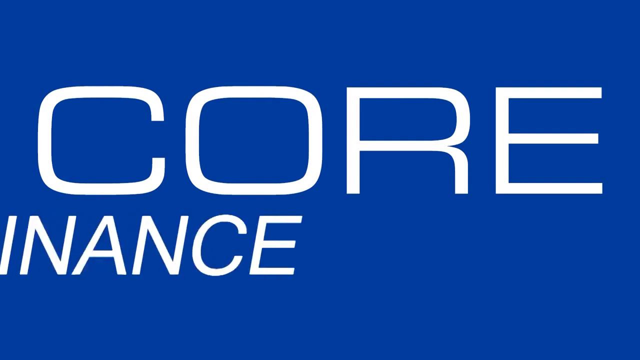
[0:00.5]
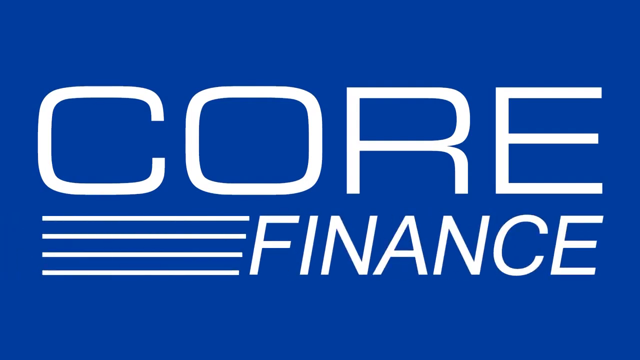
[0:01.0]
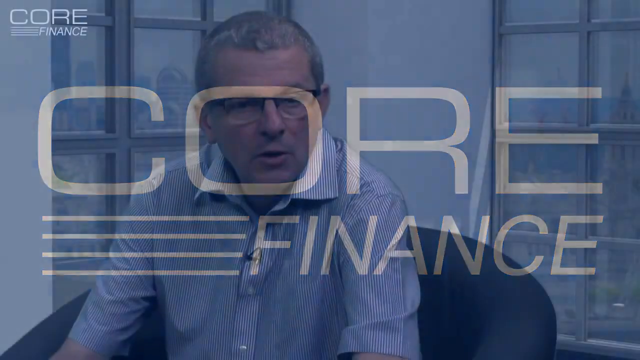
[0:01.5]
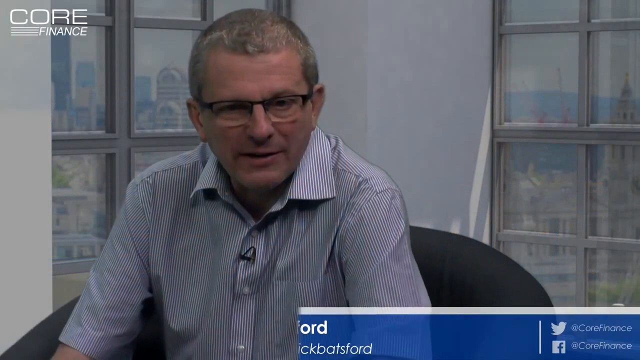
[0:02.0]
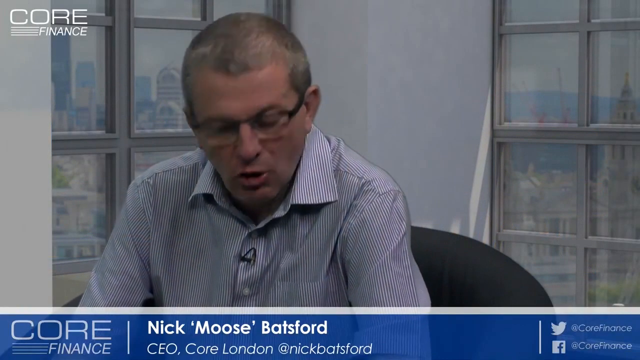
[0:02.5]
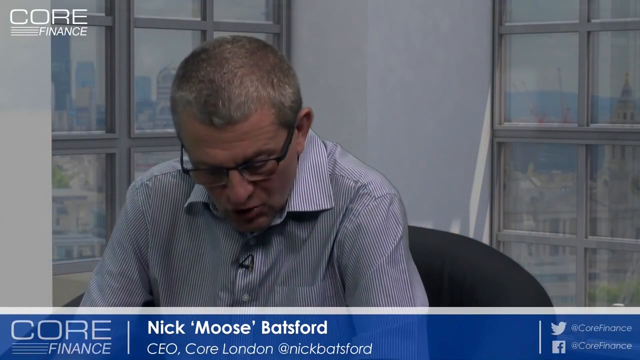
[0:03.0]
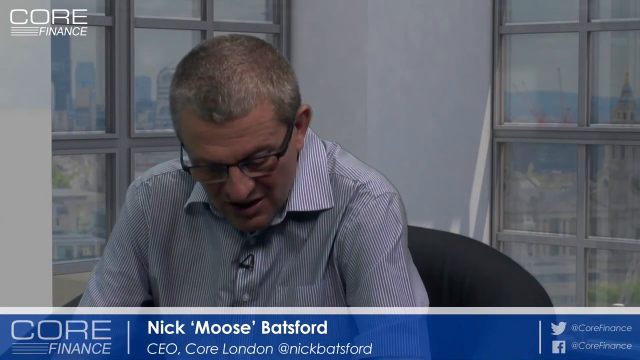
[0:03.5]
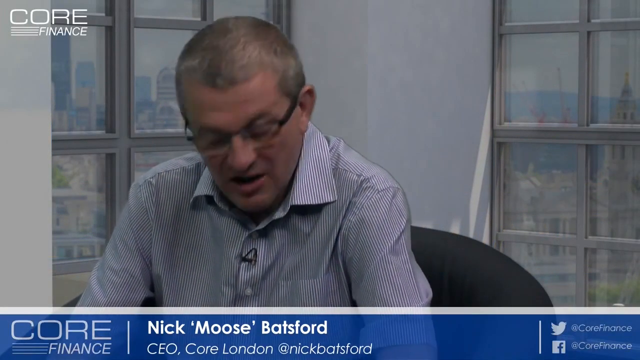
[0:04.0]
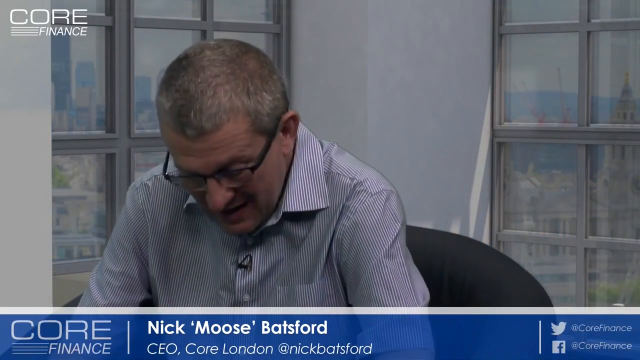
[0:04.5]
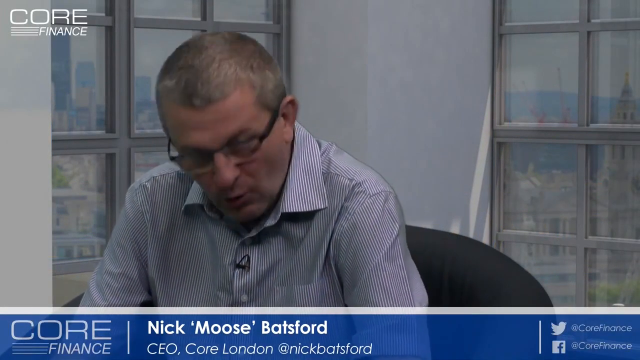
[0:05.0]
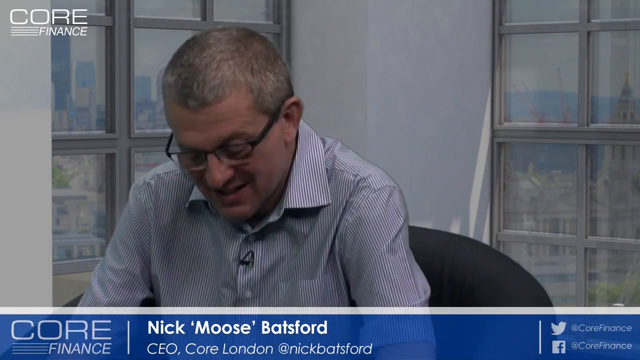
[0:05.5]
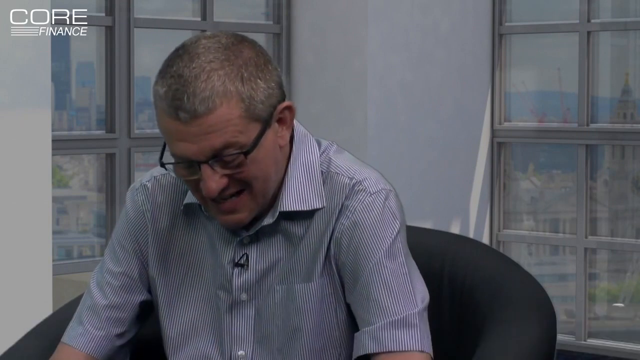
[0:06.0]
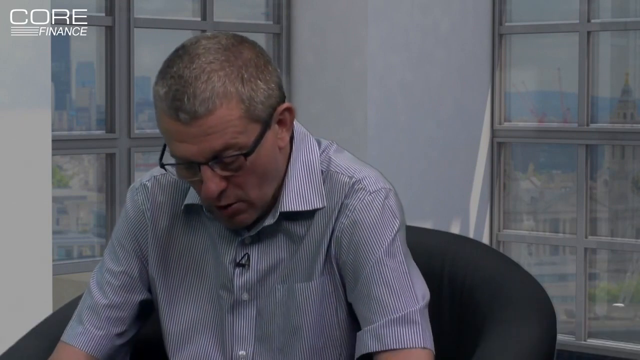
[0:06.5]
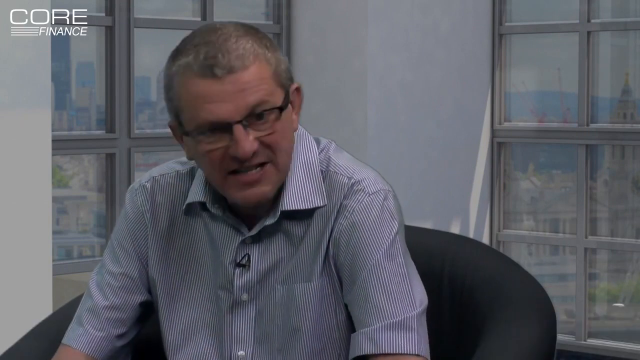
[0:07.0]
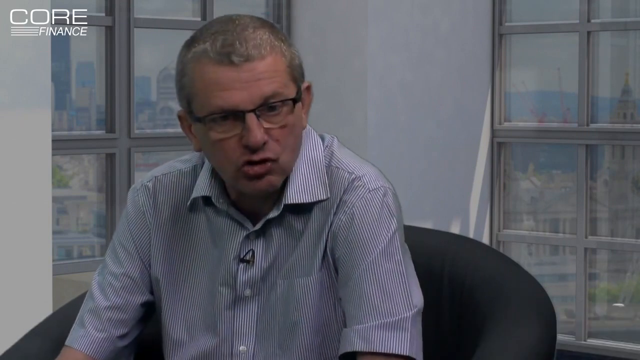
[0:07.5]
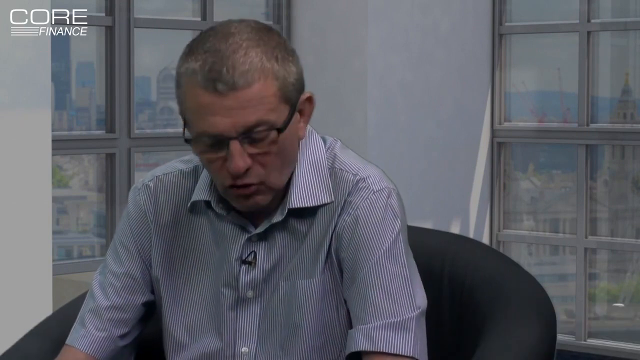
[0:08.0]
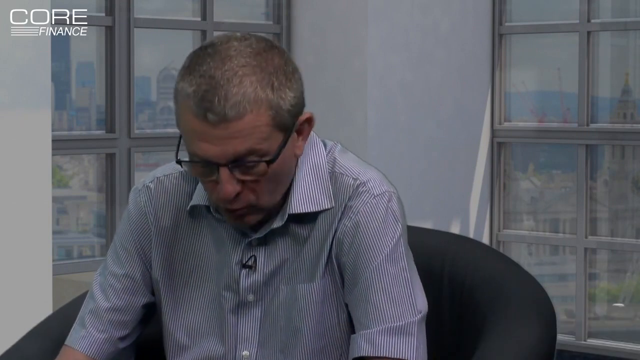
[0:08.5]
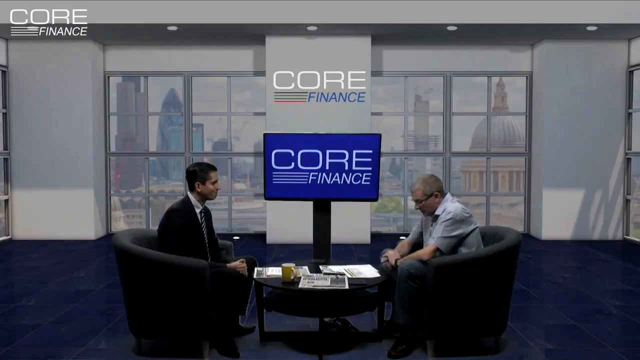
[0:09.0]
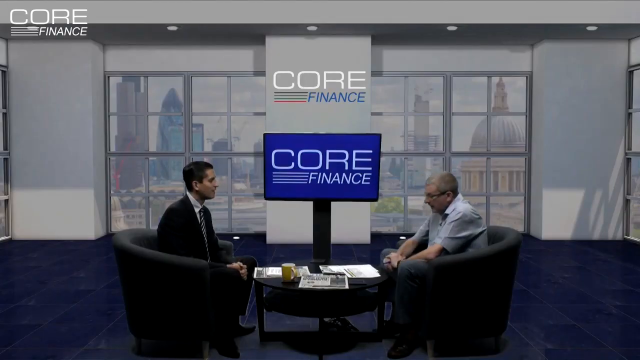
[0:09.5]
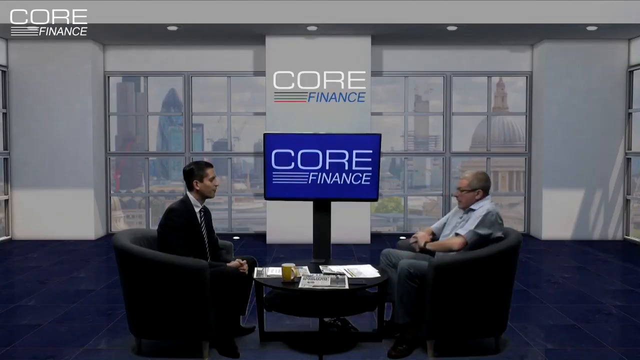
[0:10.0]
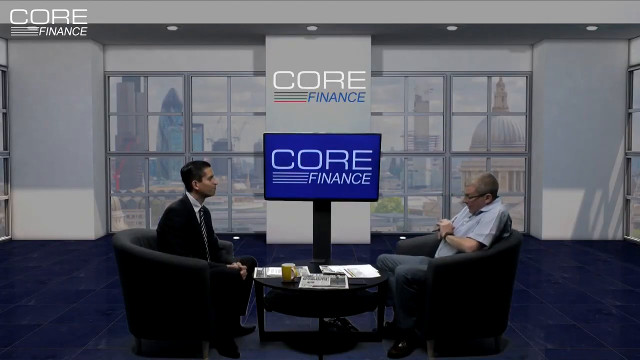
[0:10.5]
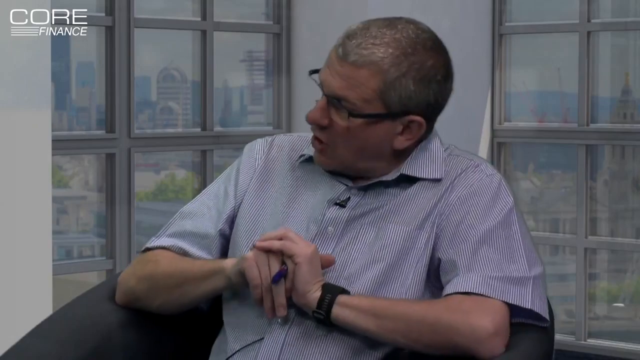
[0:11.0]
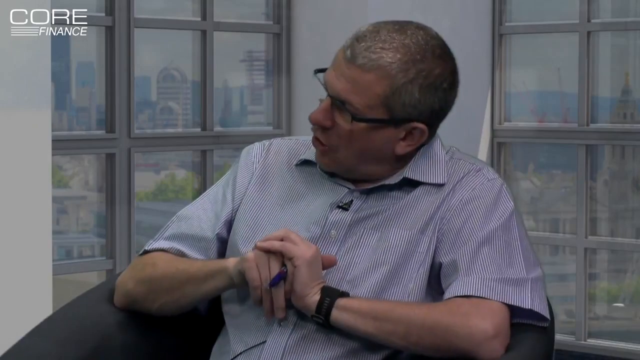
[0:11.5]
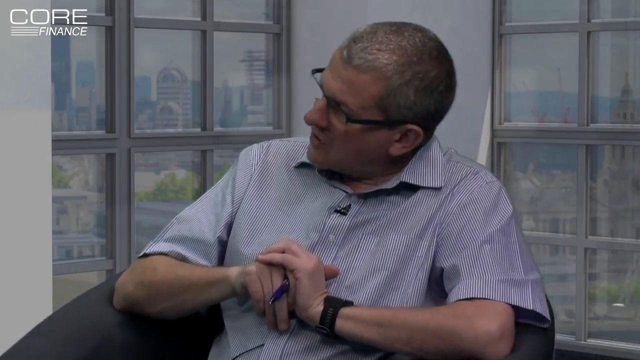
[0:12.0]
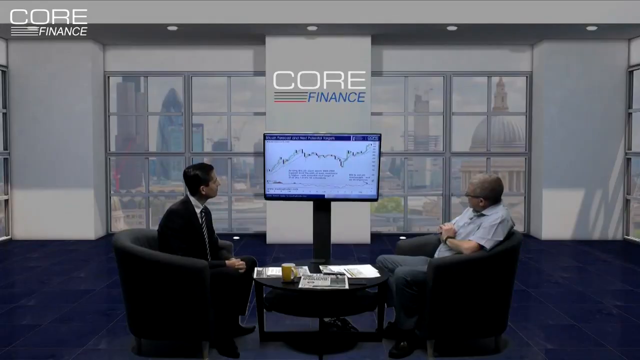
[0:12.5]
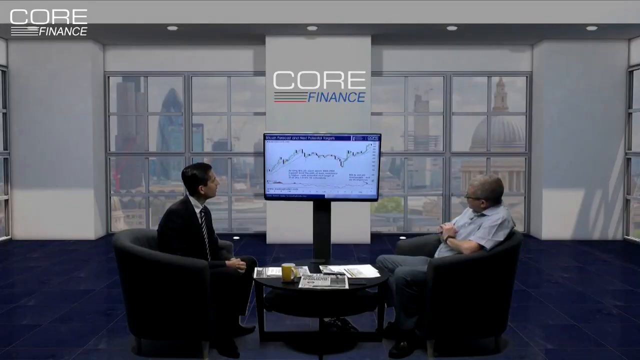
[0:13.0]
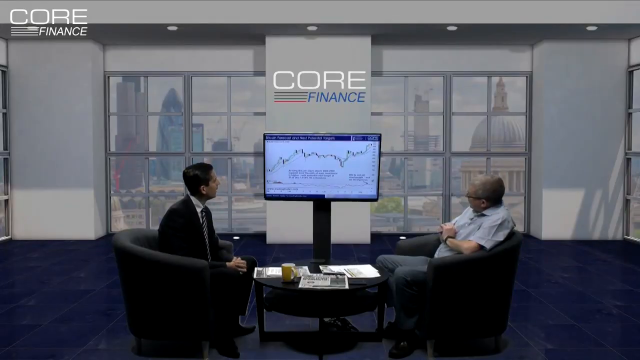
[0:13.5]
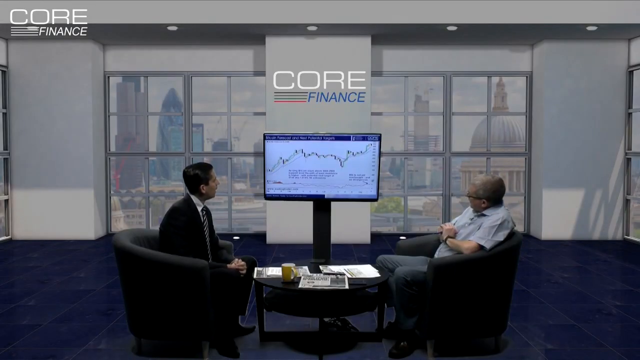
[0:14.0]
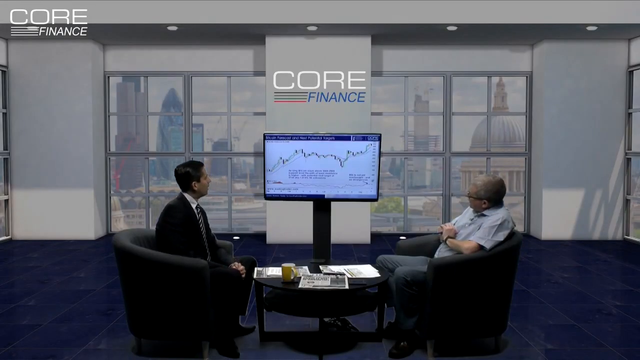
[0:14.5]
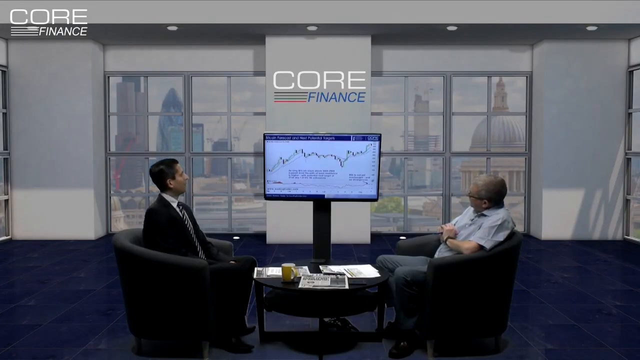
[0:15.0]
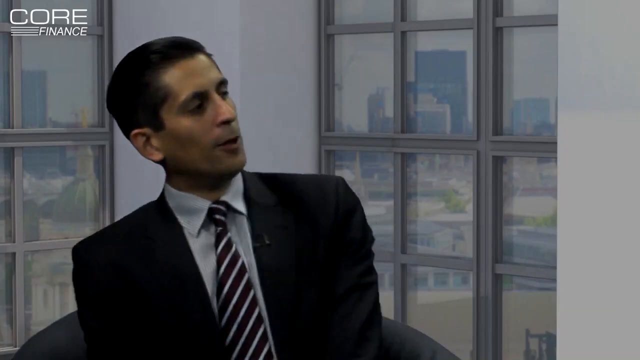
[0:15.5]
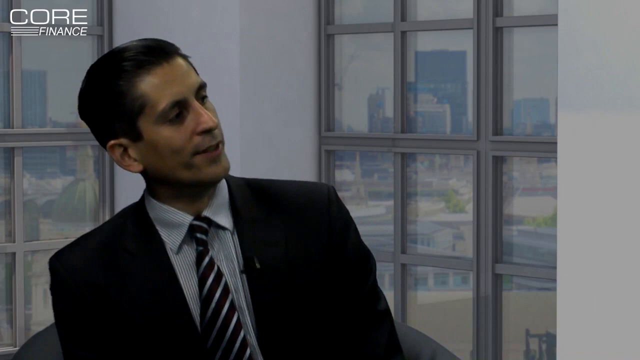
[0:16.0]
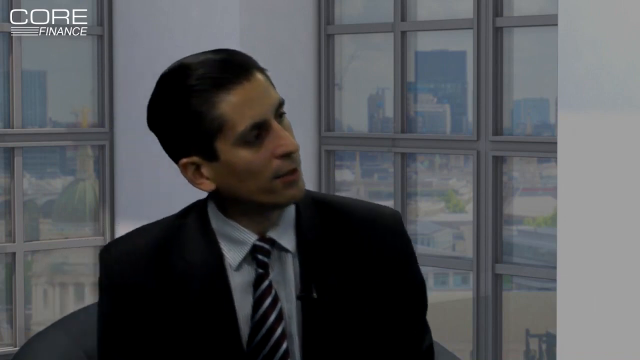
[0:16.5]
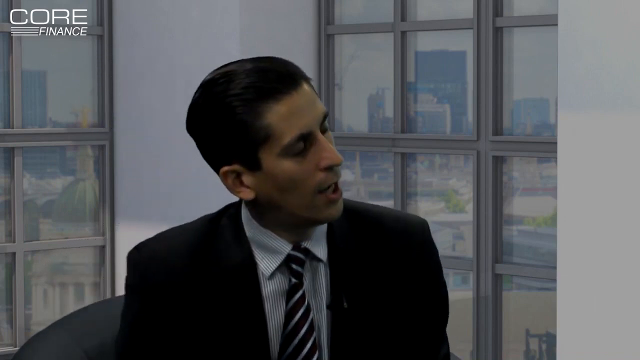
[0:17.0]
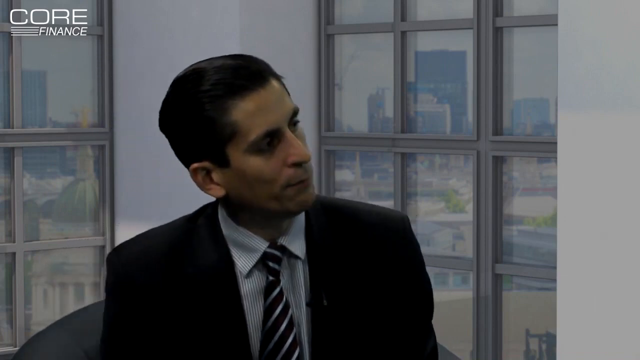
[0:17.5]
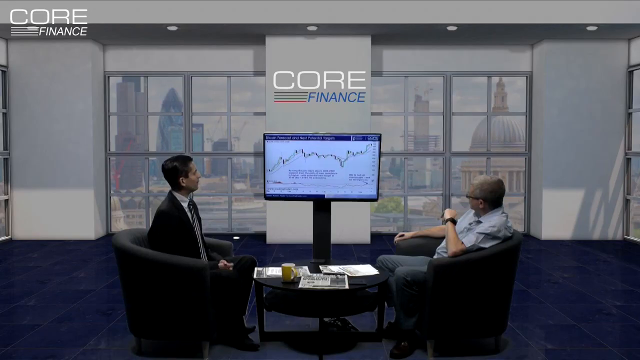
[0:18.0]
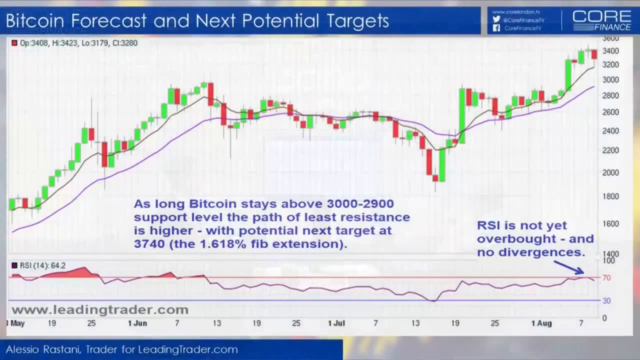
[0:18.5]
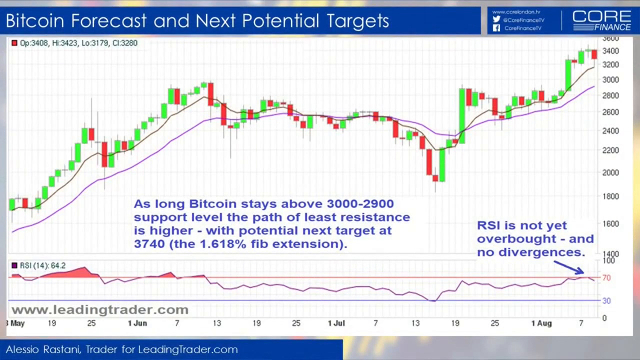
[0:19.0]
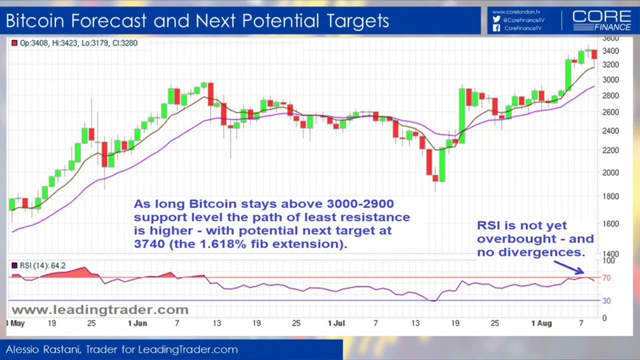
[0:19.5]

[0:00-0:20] A person is sat down on a black office chair, probably leather. He wears a short-sleeved striped t-shirt and prescription glasses, and he is sat in the corner of the office. Windows on the right and left show the outside buildings; a dome-shaped building is visible in the right window. A mic is clipped on his t-shirt, and his name appears at the bottom: "Nick Moose Batford". He is talking to the viewer. He is also carrying a blue pen and wears a black watch on his left hand. As the scene zooms out a bit, two people are seen sat in the office on black couches that face one another. A round black table is between them, with papers and one yellow mark on top of it. A television screen is mounted on the wall in between them, and they are watching the market trend on it.